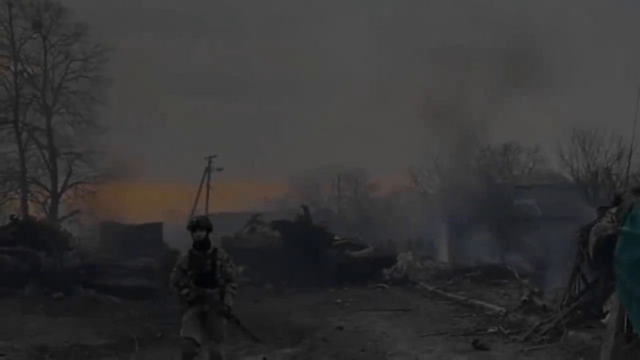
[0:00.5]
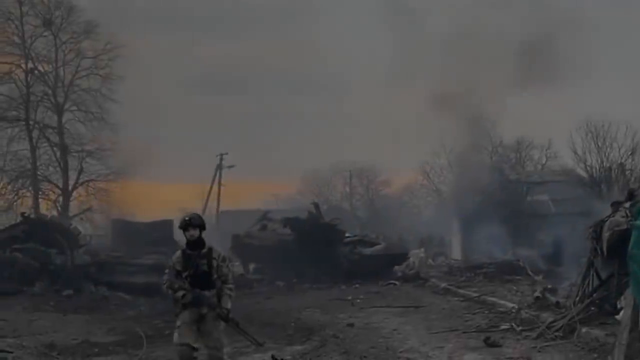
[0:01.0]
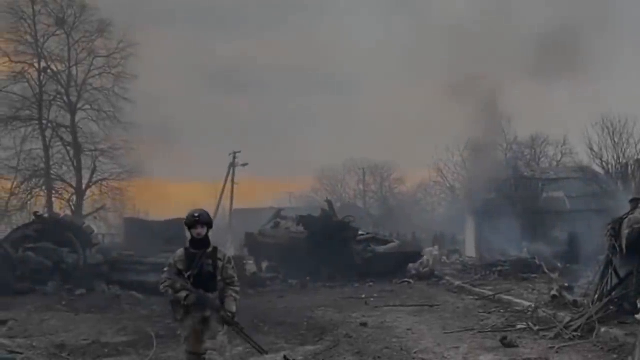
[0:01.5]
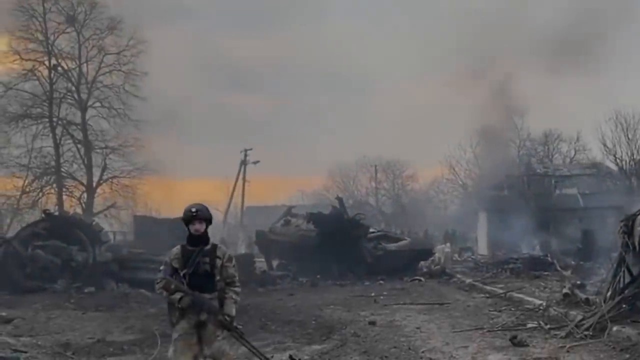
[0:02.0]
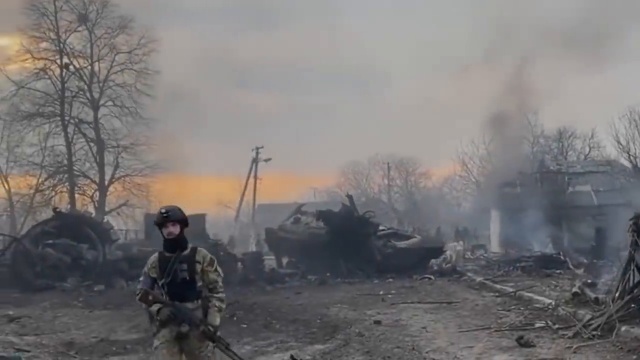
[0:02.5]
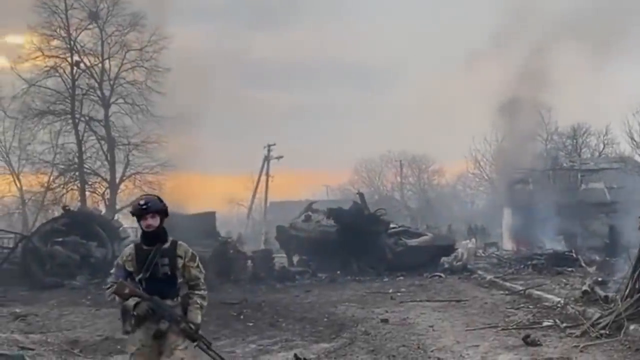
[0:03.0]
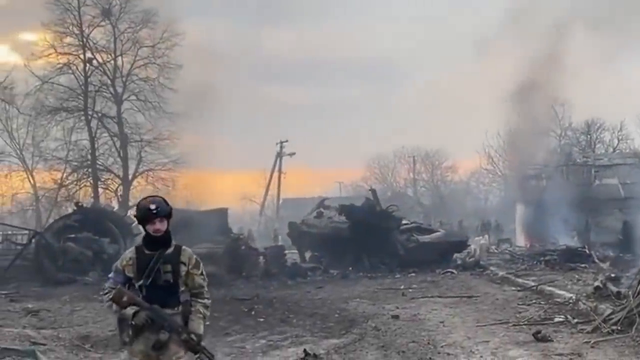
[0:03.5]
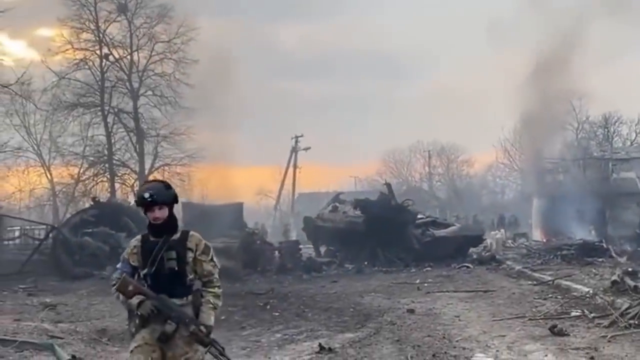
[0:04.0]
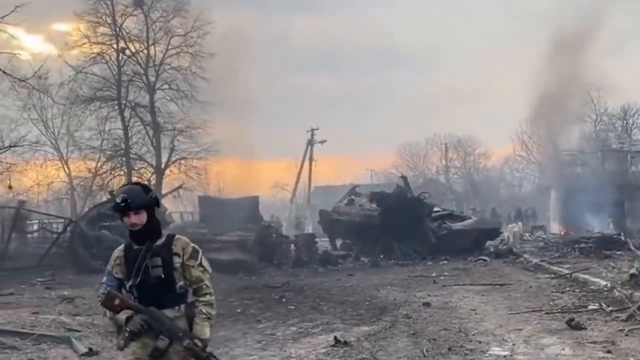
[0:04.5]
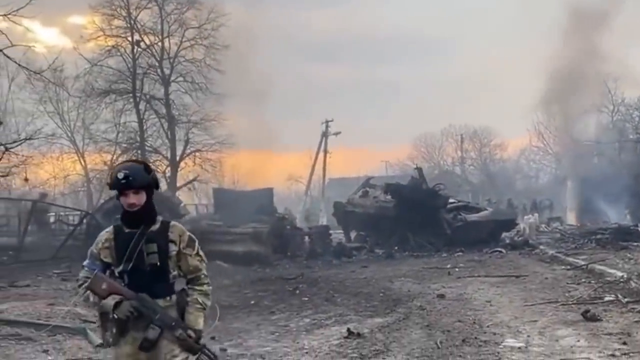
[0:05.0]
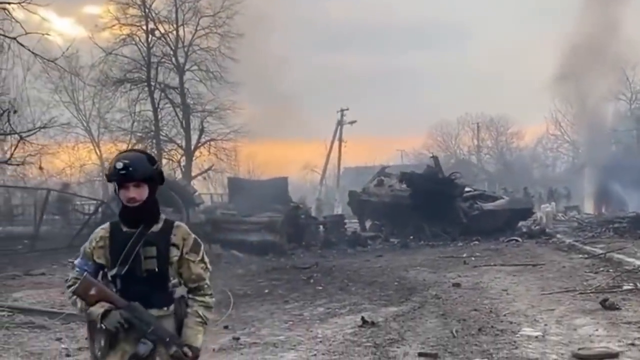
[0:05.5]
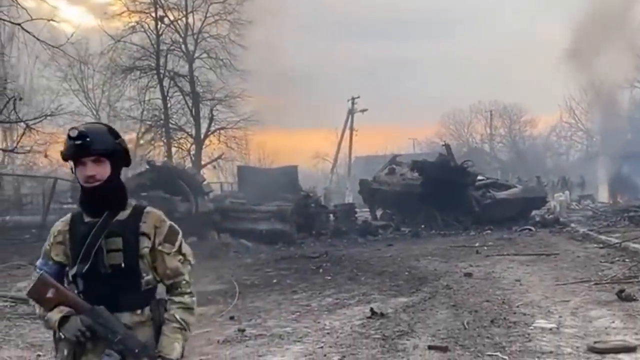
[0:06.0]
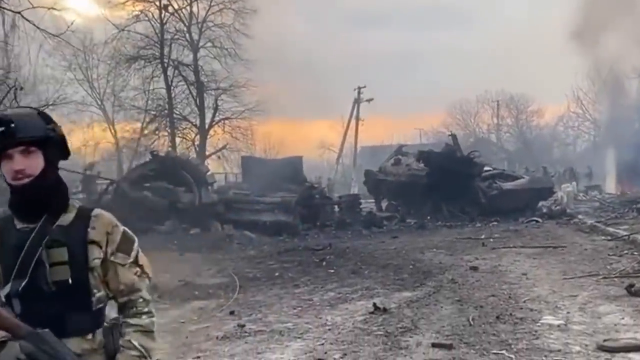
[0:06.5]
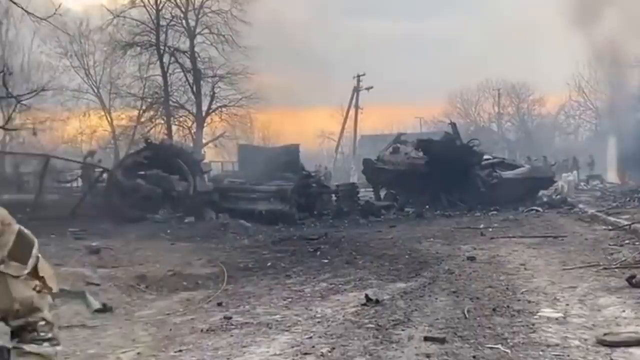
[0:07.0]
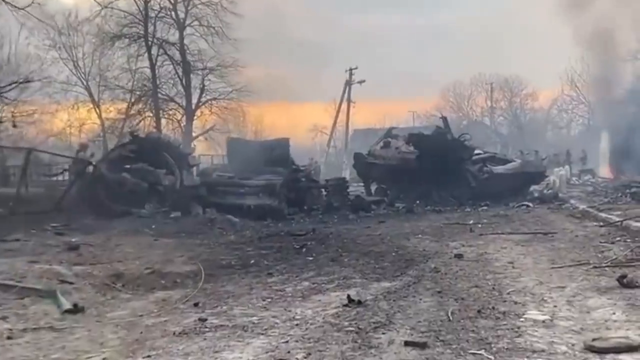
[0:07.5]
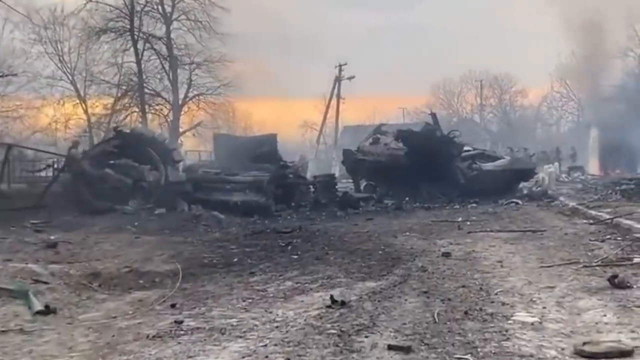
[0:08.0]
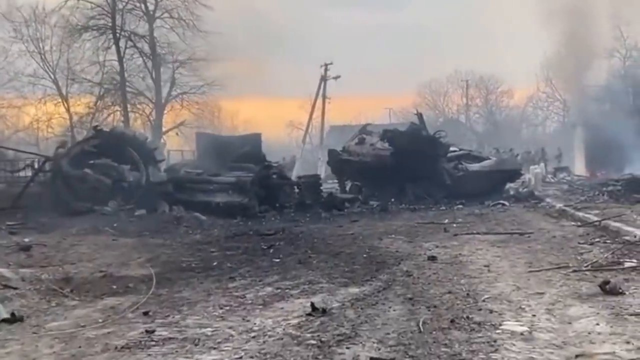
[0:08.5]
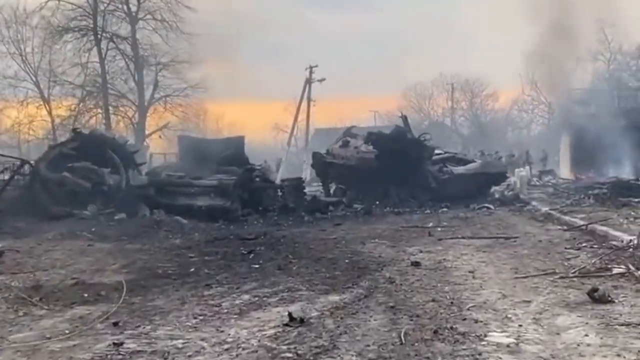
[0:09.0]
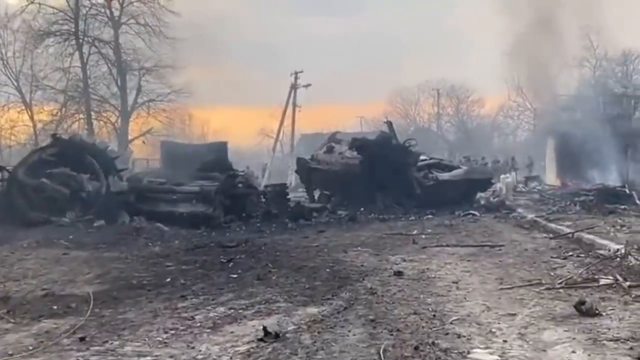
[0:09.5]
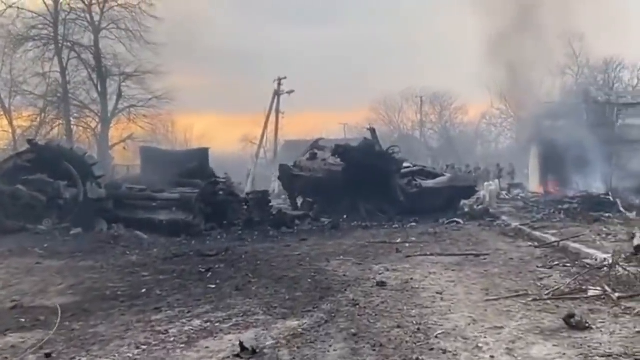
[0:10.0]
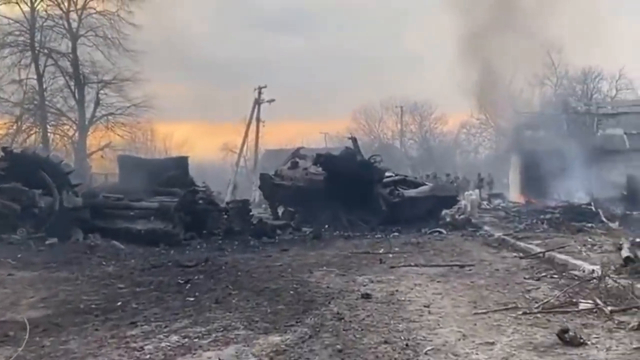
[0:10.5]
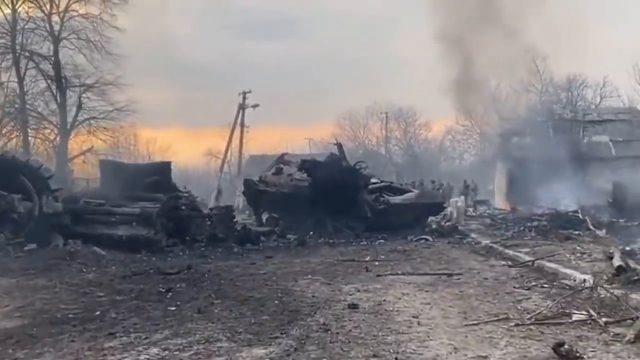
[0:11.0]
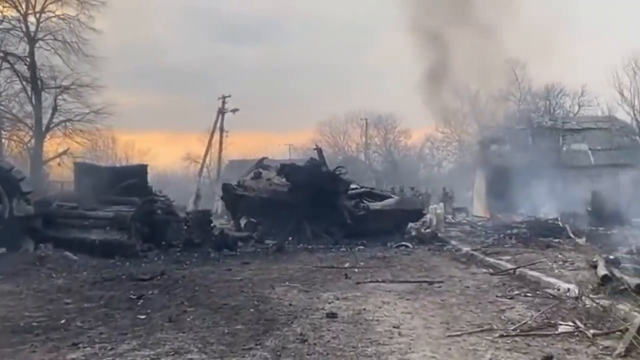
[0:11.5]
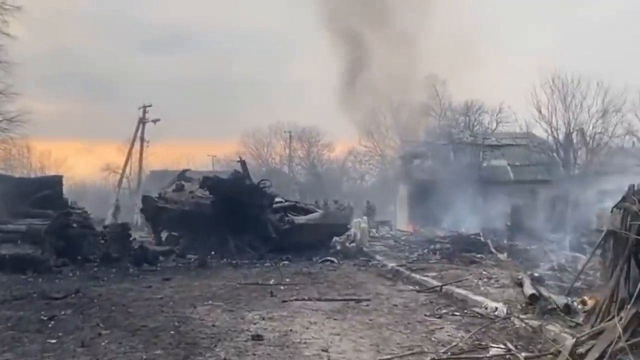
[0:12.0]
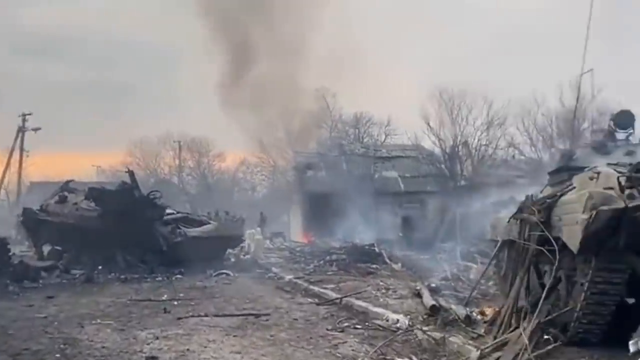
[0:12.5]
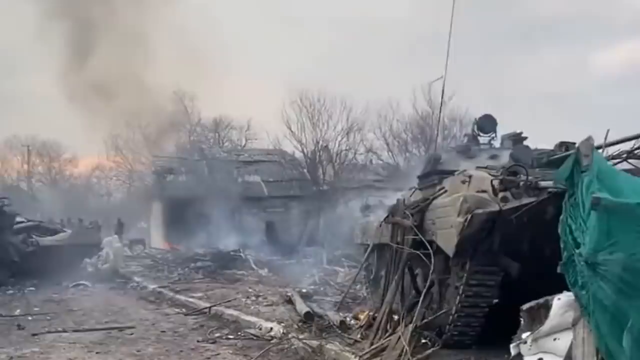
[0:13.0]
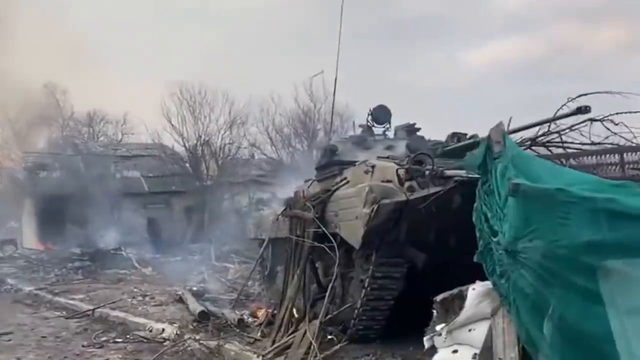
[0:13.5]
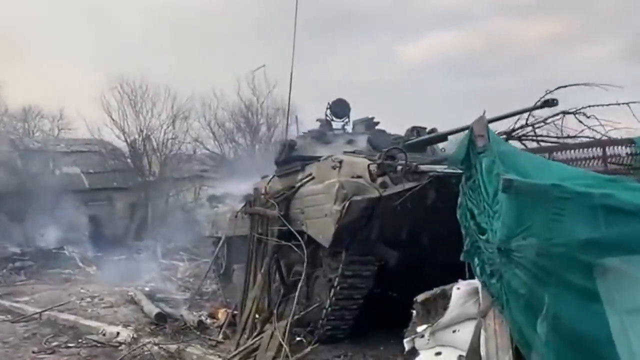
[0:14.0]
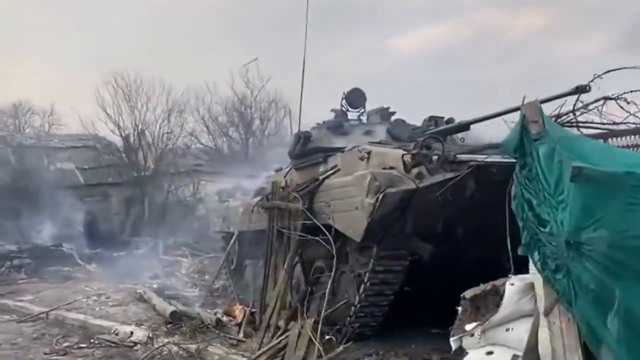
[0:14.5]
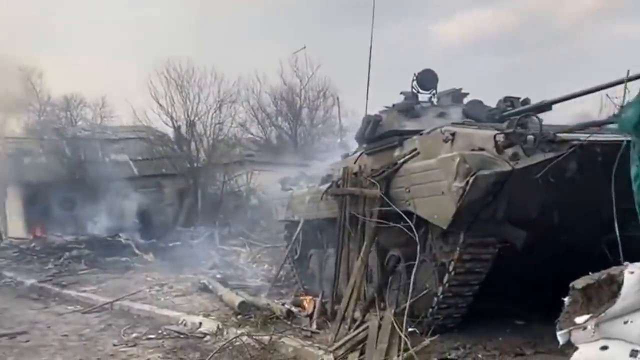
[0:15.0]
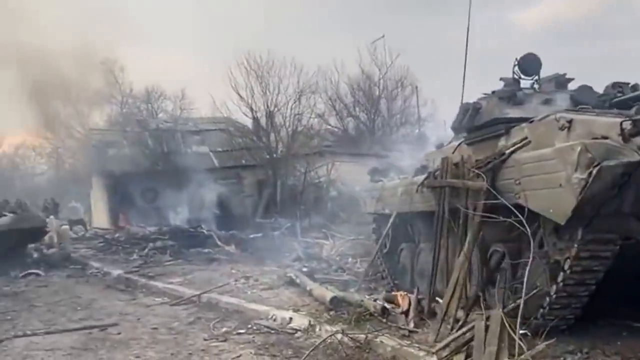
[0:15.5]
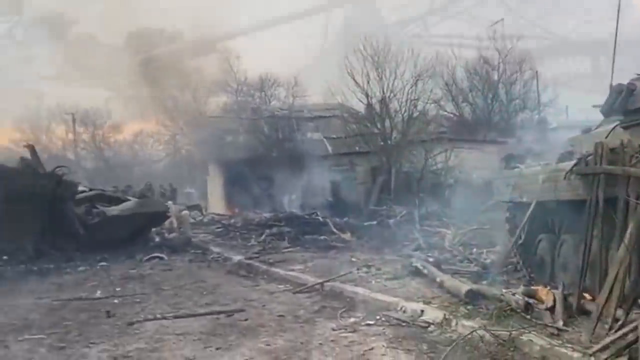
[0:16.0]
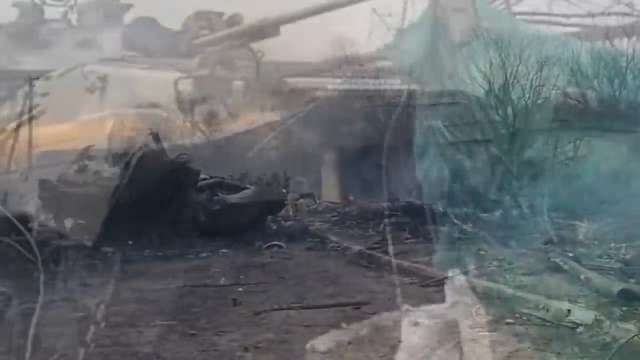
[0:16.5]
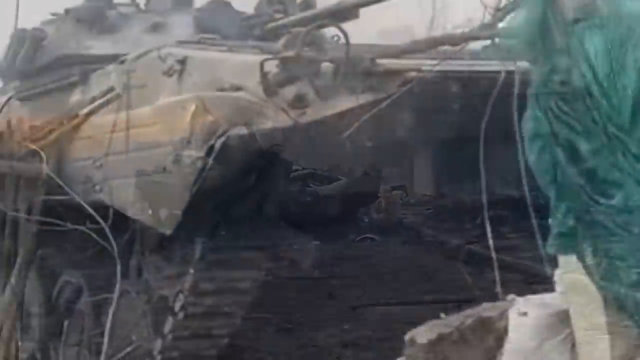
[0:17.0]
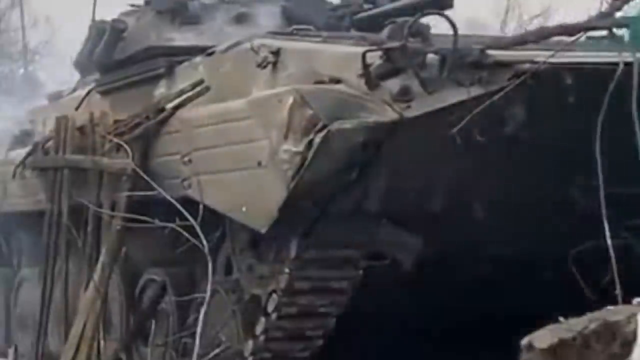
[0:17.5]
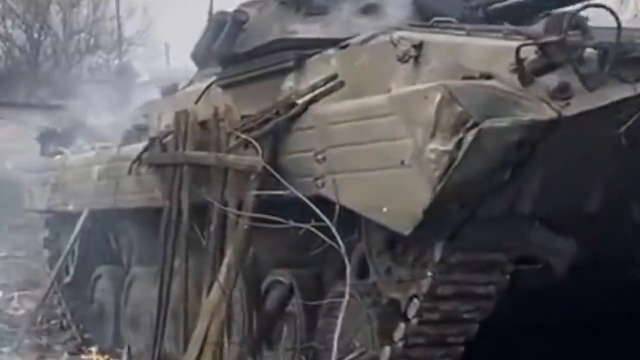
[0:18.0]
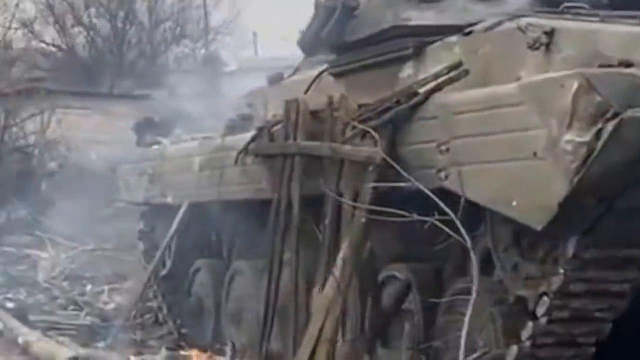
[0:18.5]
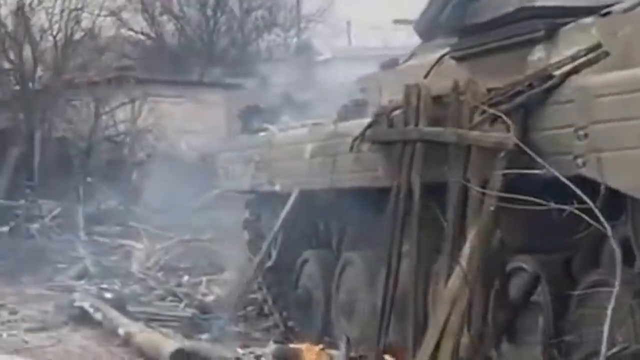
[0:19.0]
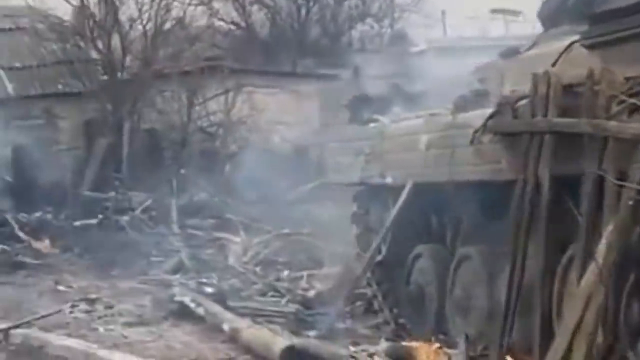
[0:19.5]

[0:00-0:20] A war-torn area, apparently in a country where war is happening, is filled with destruction: tanks that have been blown up, destroyed houses and other wreckage. It looks like the site of a recent battle, with things destroyed, bombed or attacked in some way. It is unclear whether it is morning or evening. At the beginning, a soldier walks toward the camera, coming into frame. As the camera pans around, at least three or four vehicles that have been exploded and destroyed come into view, along with destroyed houses.